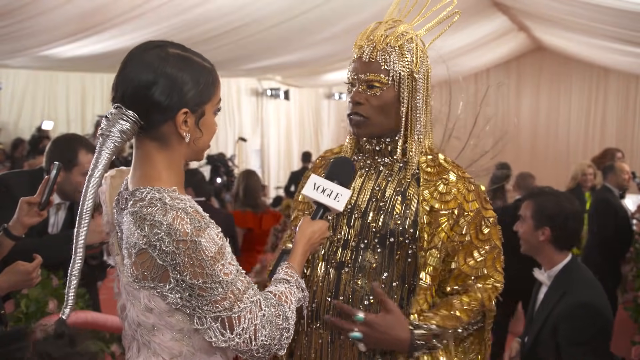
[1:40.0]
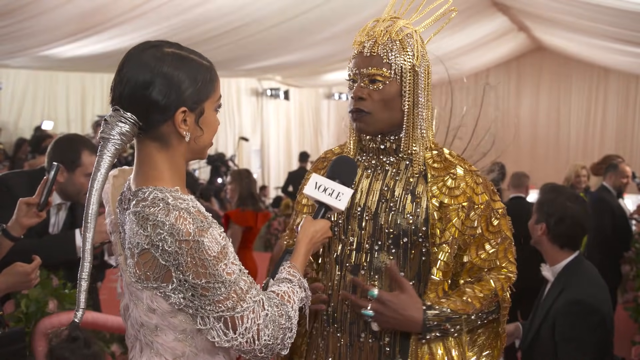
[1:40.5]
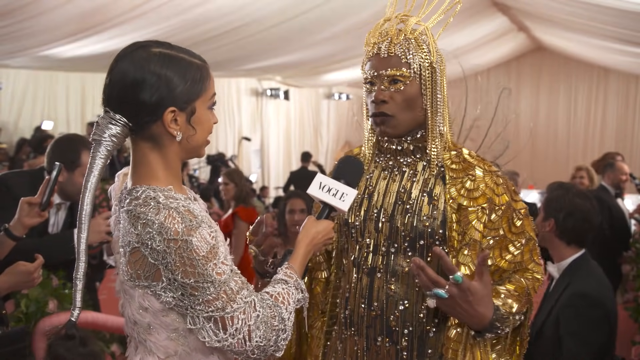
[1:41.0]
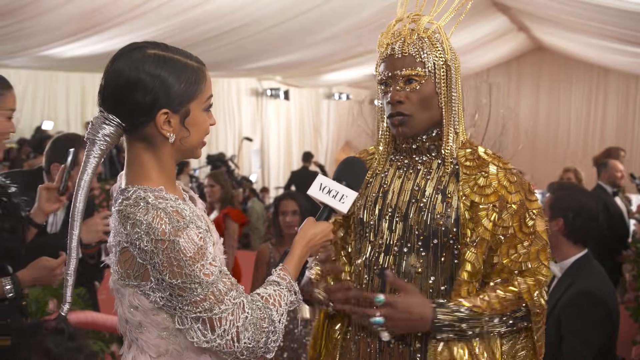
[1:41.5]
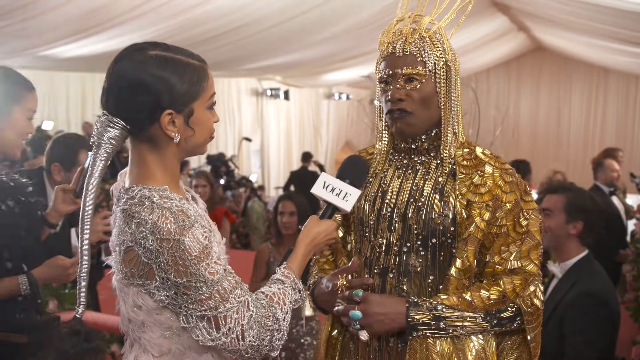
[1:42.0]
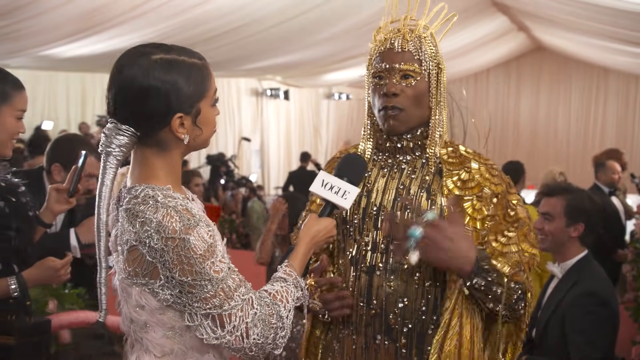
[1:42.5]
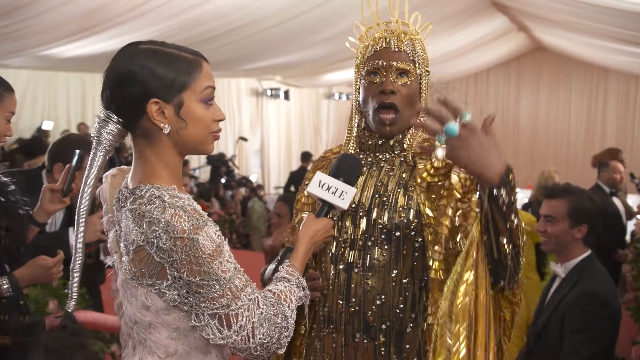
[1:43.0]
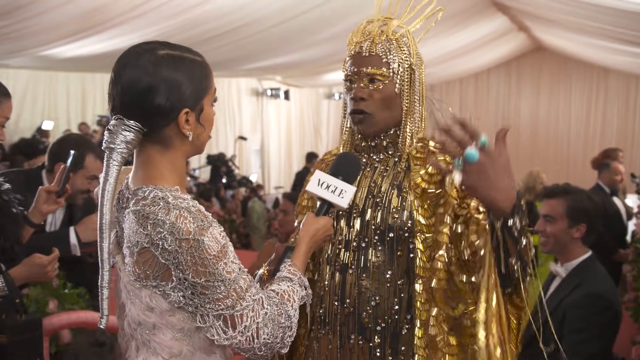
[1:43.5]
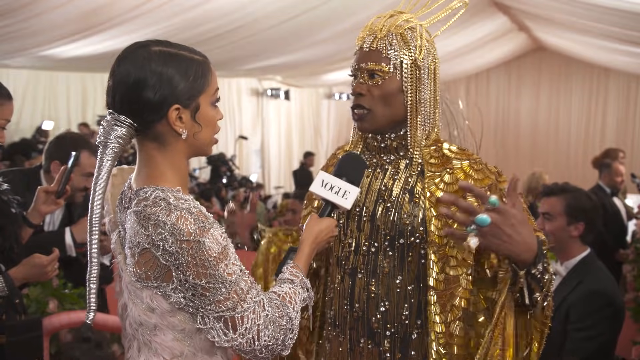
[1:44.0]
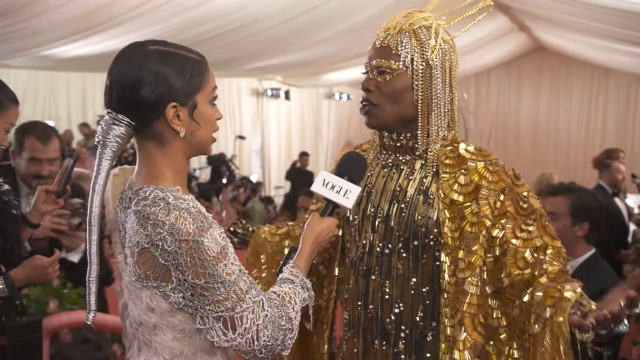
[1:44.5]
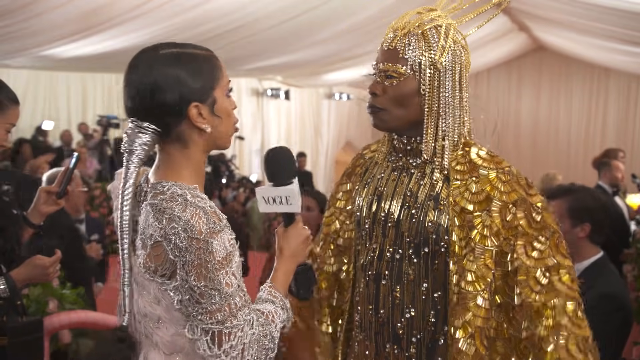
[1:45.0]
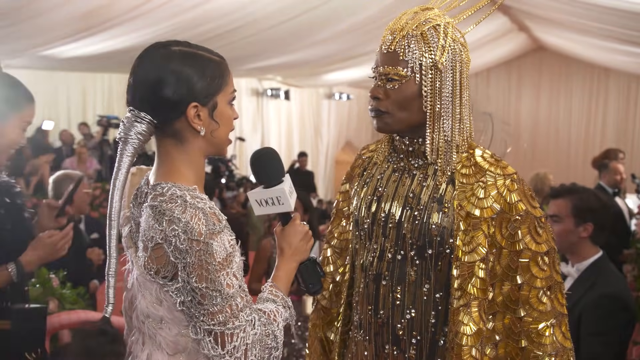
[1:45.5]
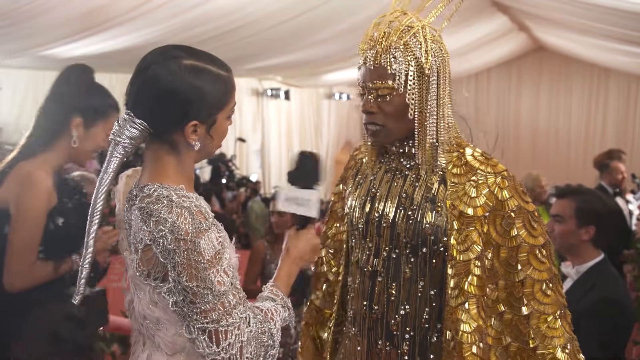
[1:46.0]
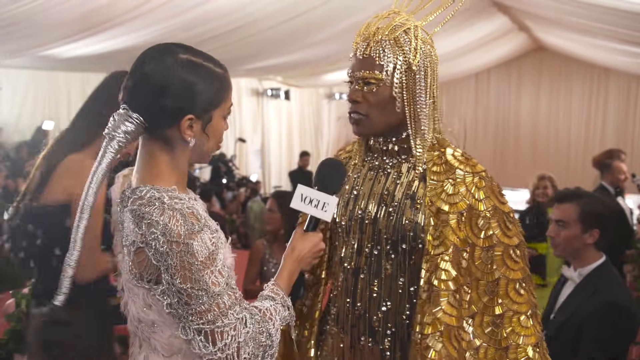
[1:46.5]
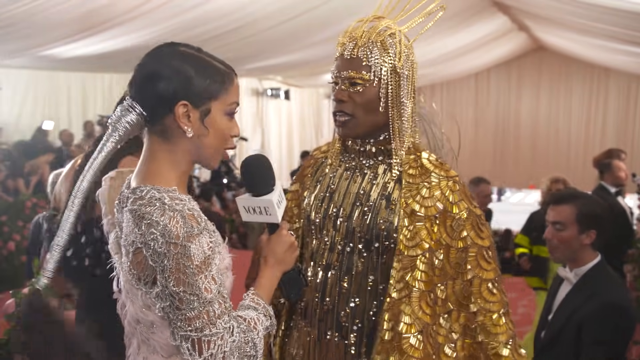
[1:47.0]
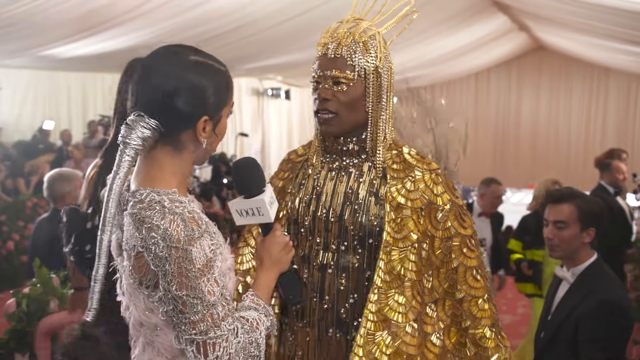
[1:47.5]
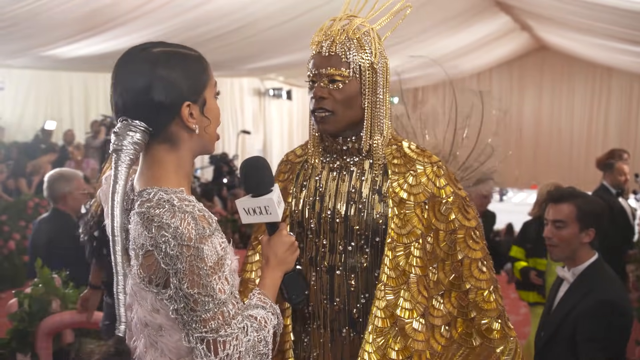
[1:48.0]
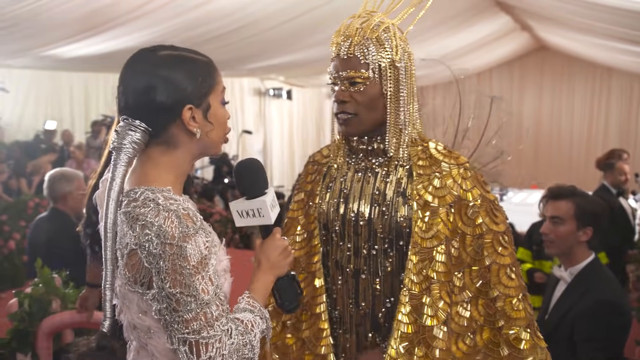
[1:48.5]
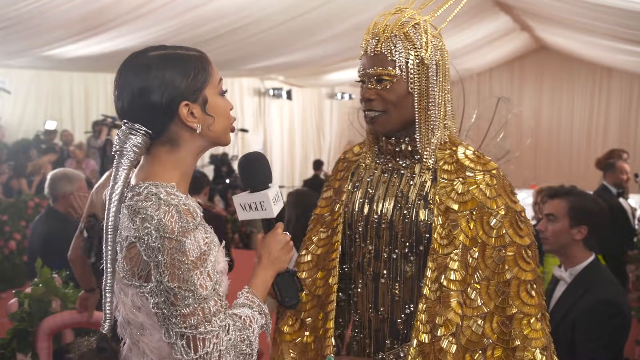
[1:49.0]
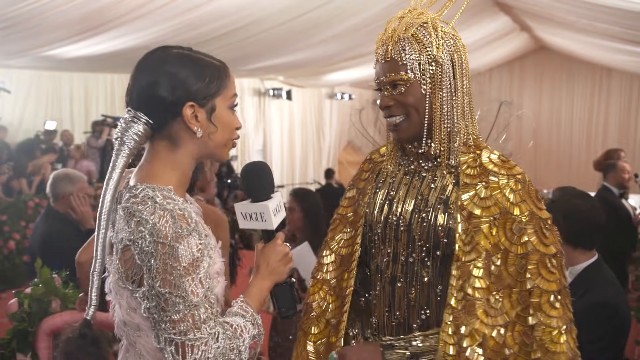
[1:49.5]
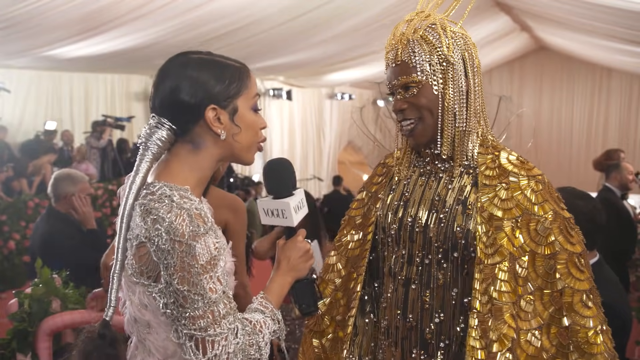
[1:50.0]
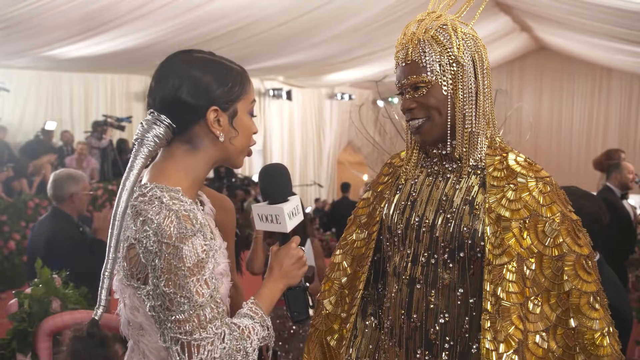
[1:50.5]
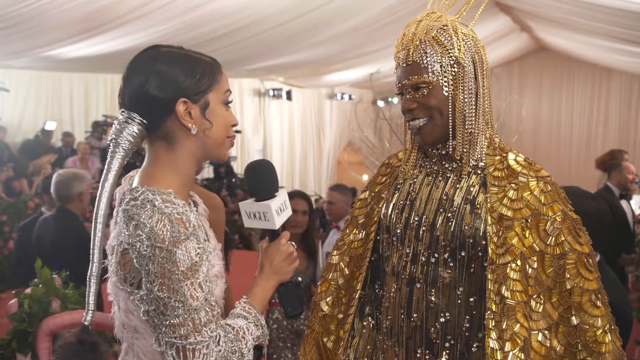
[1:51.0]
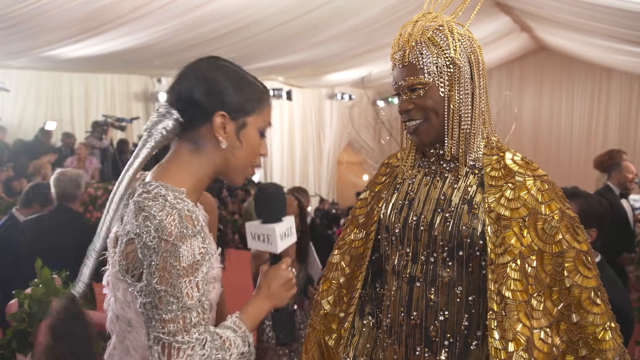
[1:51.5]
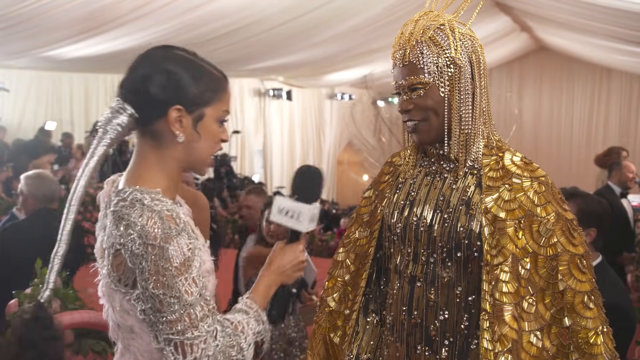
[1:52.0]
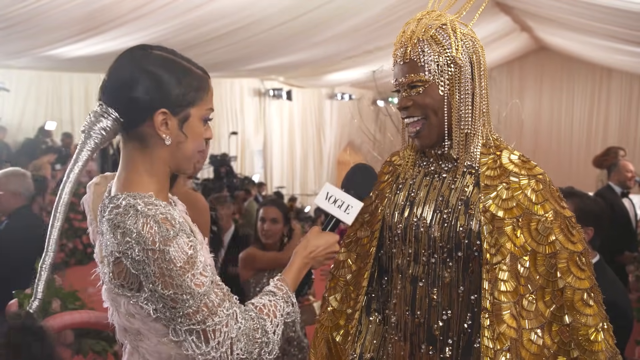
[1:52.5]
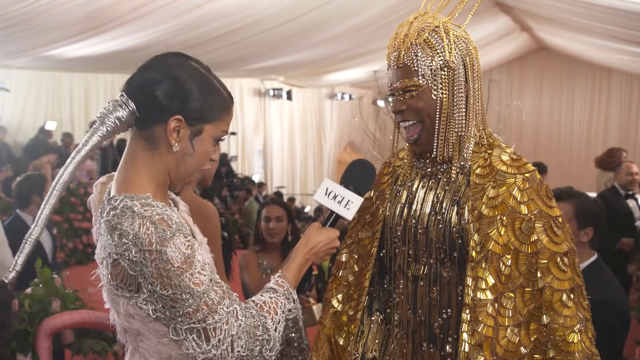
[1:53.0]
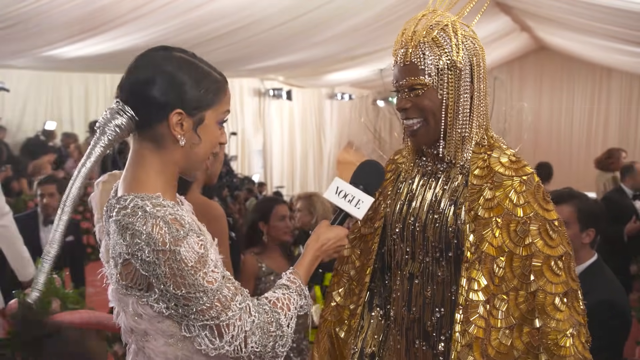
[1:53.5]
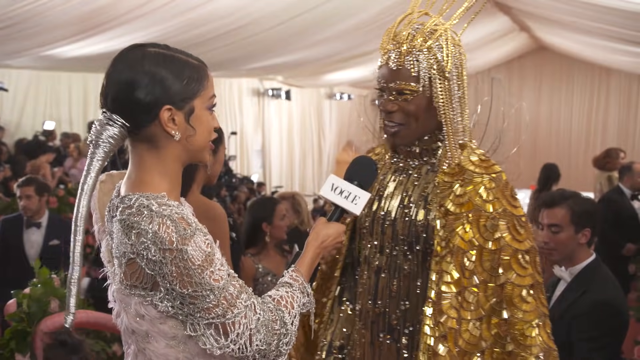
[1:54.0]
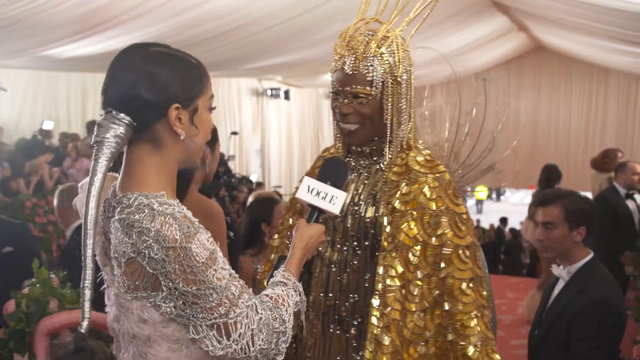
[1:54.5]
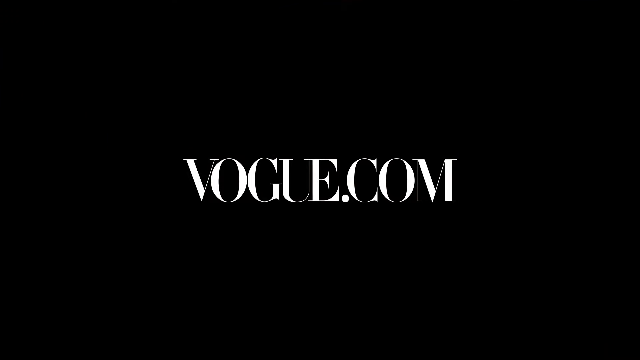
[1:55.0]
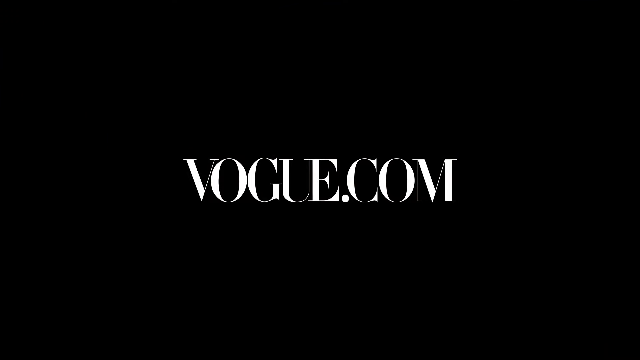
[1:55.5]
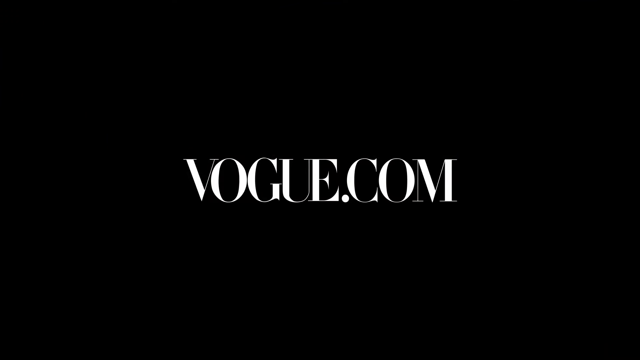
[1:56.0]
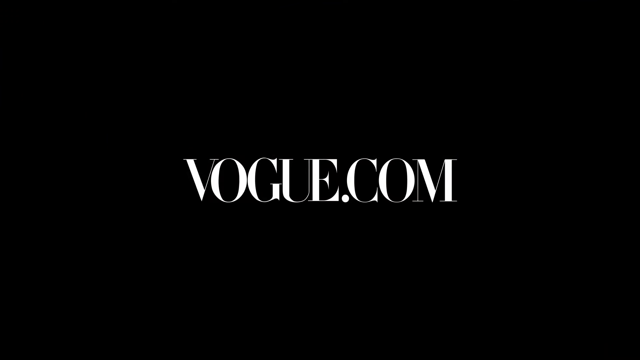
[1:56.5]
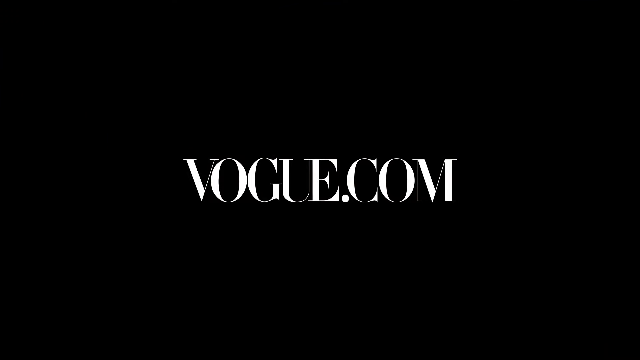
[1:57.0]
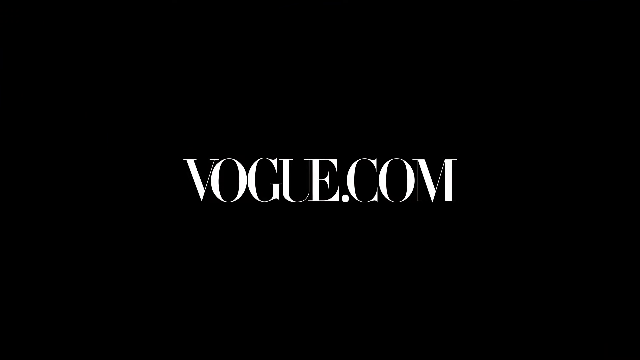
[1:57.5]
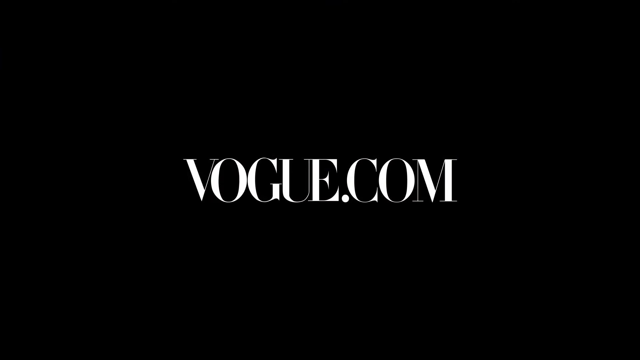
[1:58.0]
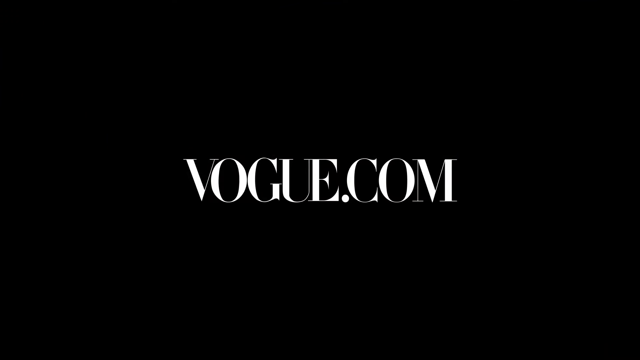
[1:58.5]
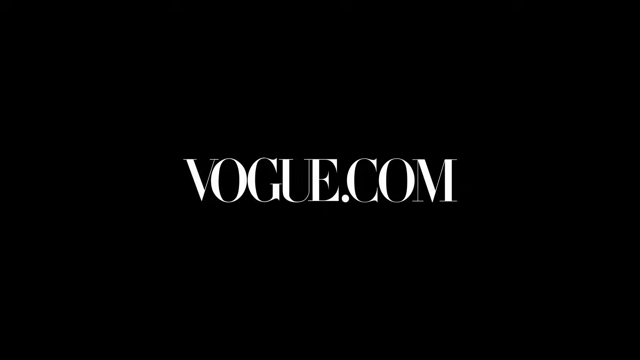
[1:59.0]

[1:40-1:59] Further details of Billy's outfit are visible: thin, wiry gold plumes appear to rise from his upper back, with at least four of them visible from this view of him from the front right side. He continues gesturing with his hands. He wears turquoise stone rings on three fingers of his right hand, the forefinger, middle finger and ring finger, and a gold ring on his right little finger. The top of his hand is visible as he looks up toward the air in a graceful pose, almost like he is performing on stage. He brings his hands back down, nods his head yes, and smiles, showing dimples. The reporter bows to him and holds the microphone in her right hand up to her mouth as she speaks to Billy. Other celebrities and Met Gala employees are in the background, and a cameraman is in the back left corner of the room. There is lots of lighting on the left side of the room where the wall meets the ceiling, with at least four light fixtures, and celebrities walk around and converse.